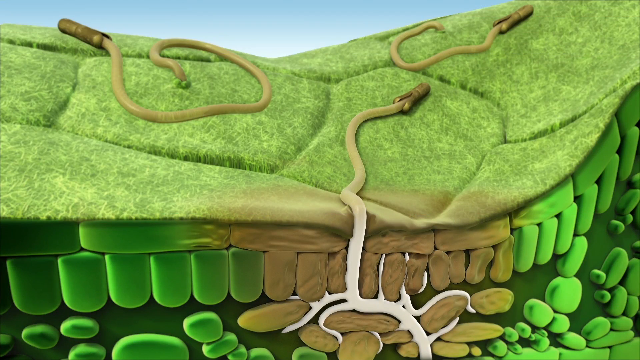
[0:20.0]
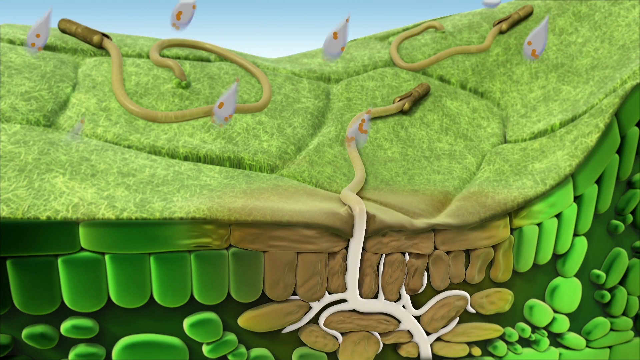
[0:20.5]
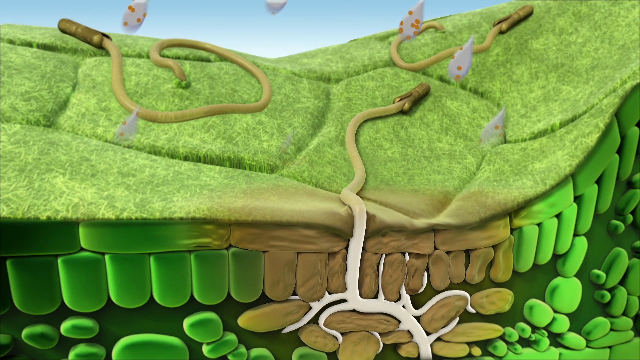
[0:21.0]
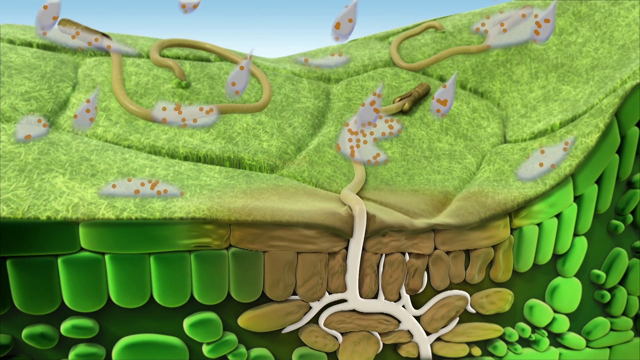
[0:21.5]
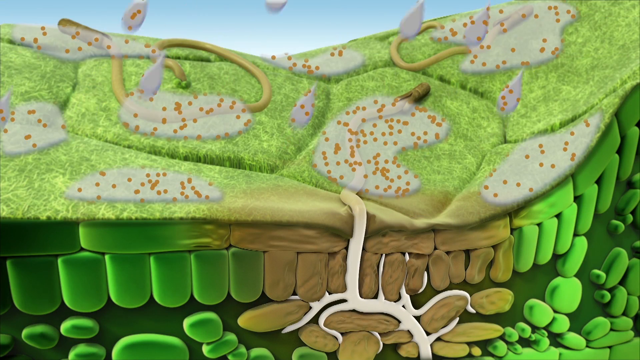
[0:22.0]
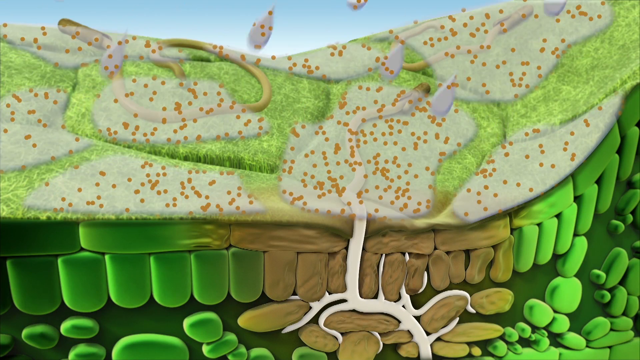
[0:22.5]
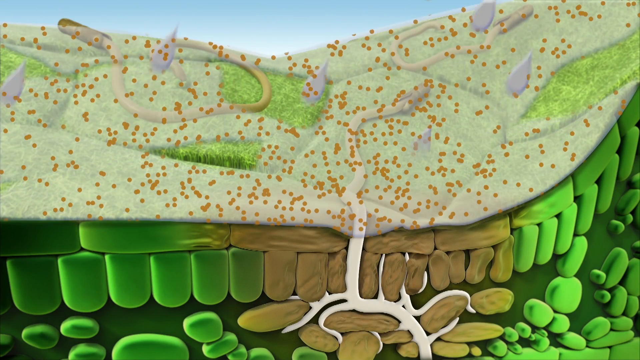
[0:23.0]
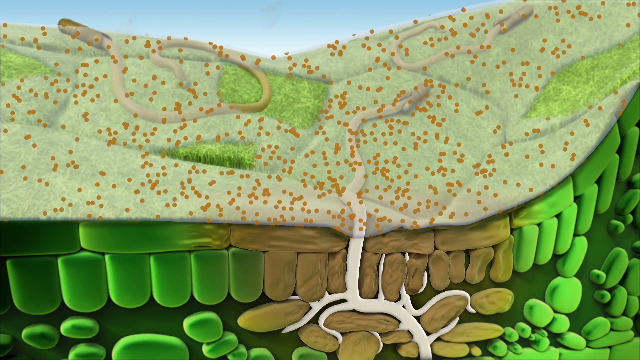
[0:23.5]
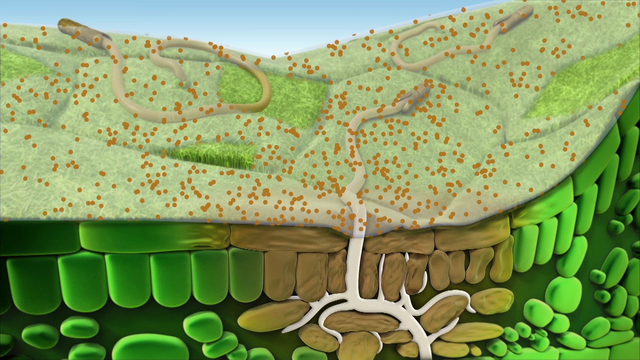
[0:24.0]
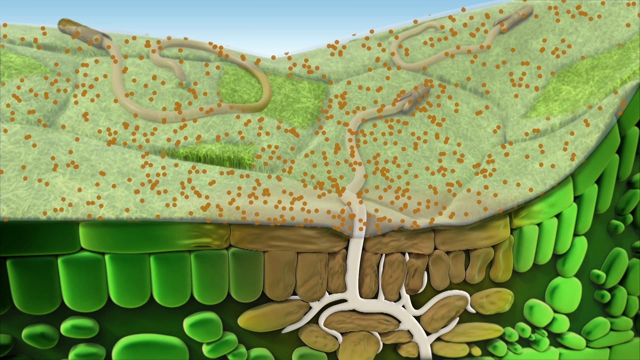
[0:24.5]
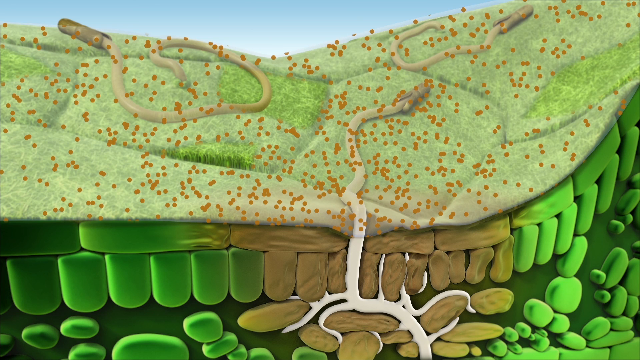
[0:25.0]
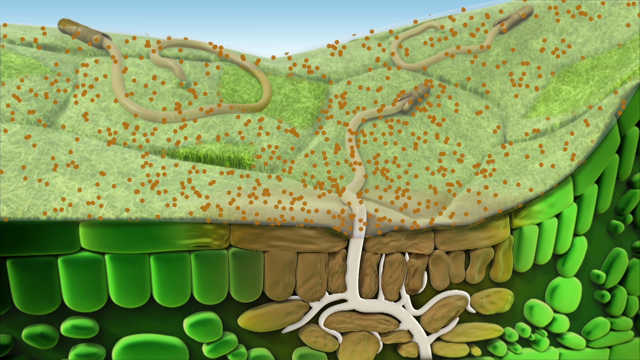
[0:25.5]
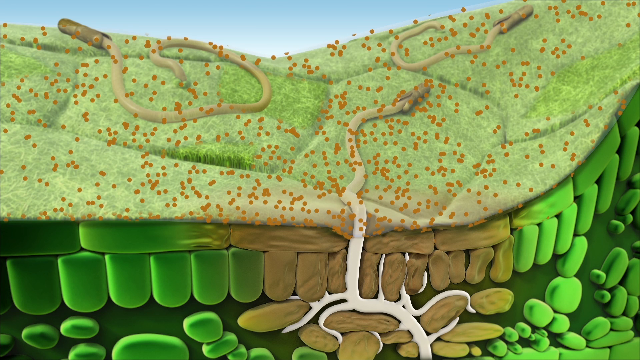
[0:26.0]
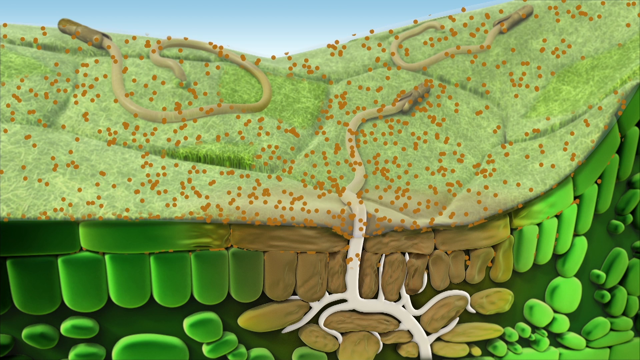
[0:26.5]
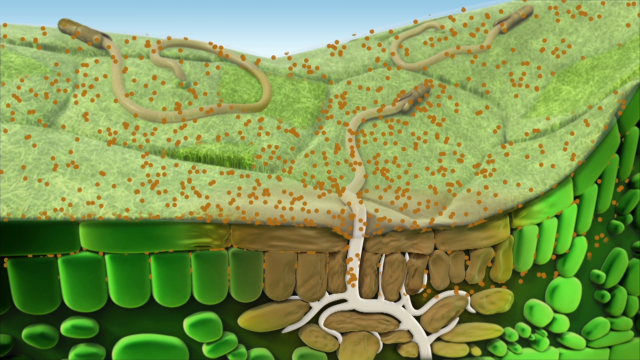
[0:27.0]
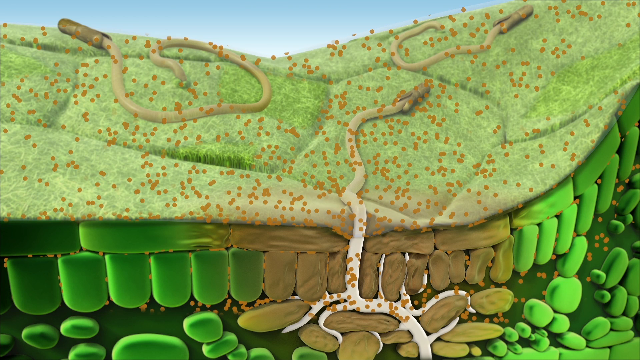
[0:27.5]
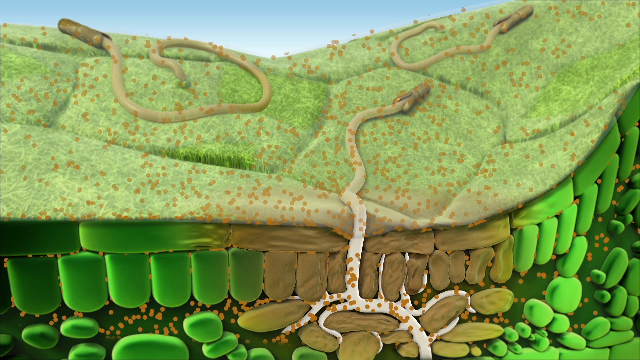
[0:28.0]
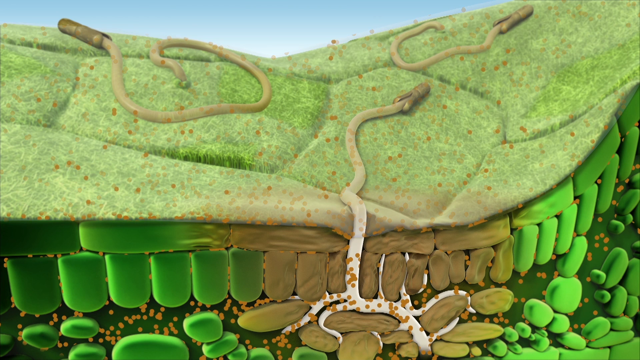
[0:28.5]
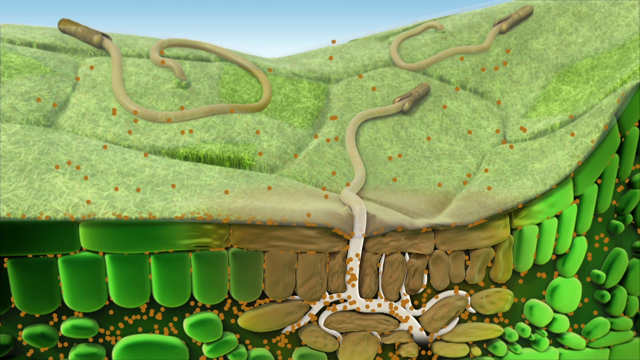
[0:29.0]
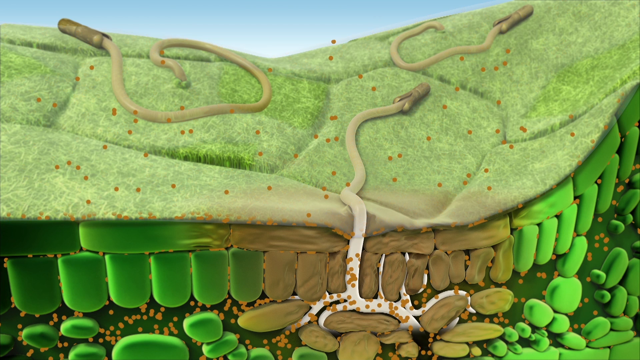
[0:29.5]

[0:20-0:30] The same diagram continues, and cartoon rainwater hits the land surface. Brown dots, apparently representing some kind of infection or bacteria, hit the grassy meadow shown in the diagram and then seep down under the surface of the land into the roots. The exact process being depicted is unclear. The sky is blue in the background, and the image looks abstract and diagram-like.